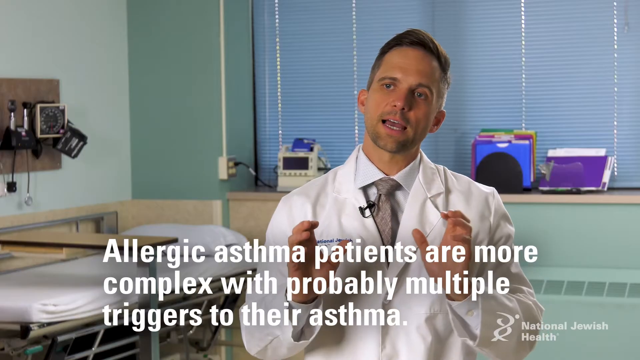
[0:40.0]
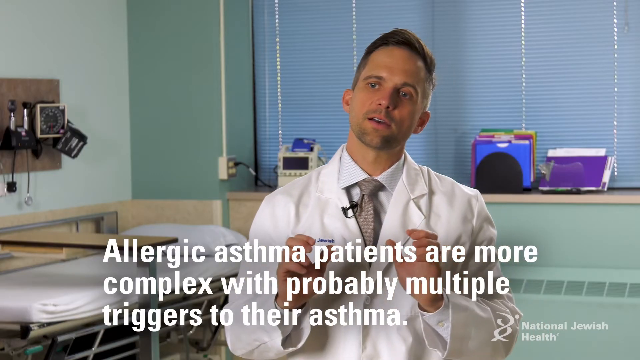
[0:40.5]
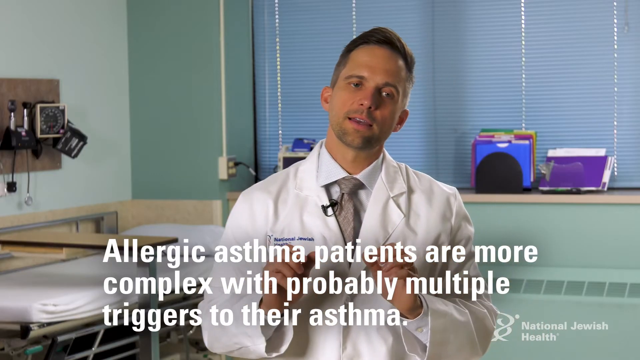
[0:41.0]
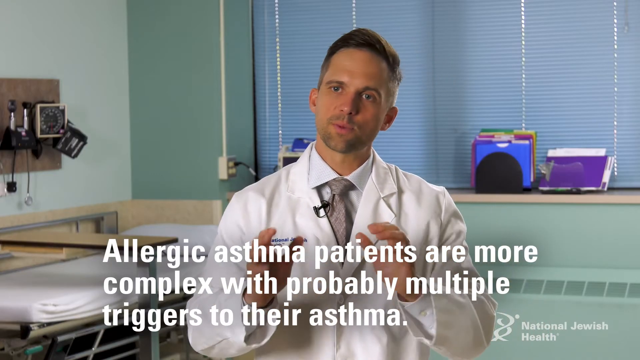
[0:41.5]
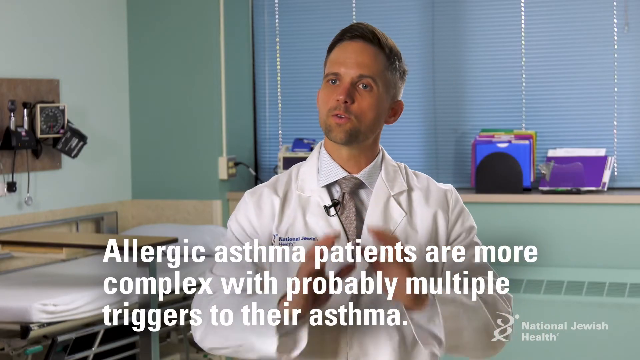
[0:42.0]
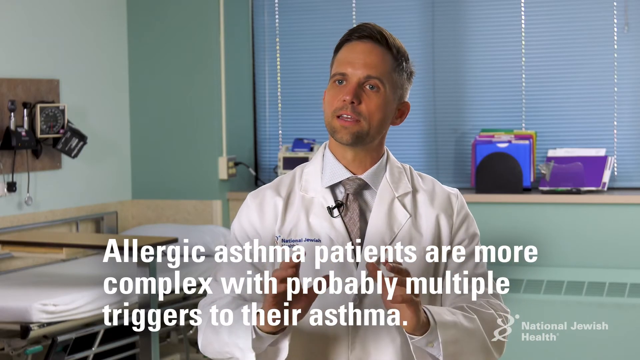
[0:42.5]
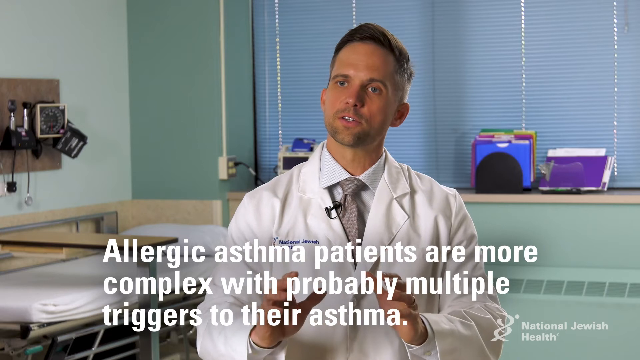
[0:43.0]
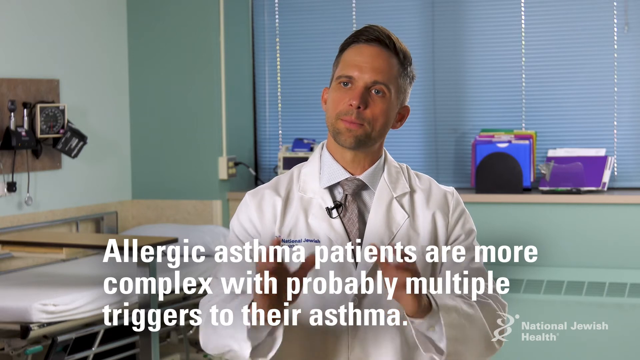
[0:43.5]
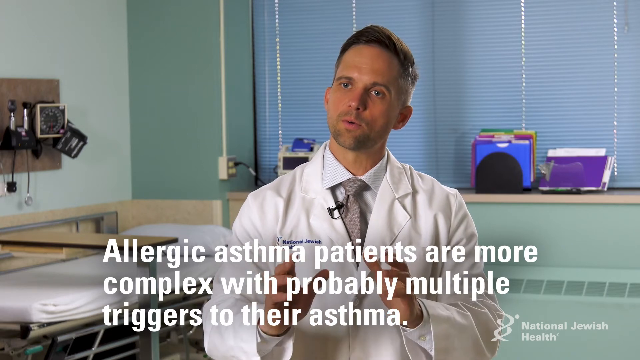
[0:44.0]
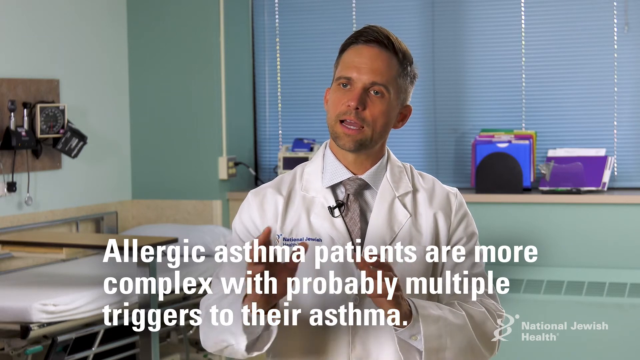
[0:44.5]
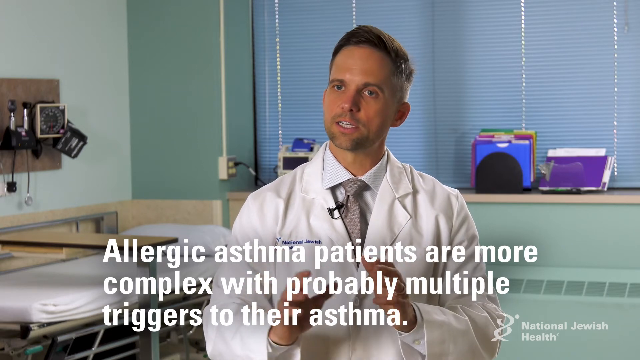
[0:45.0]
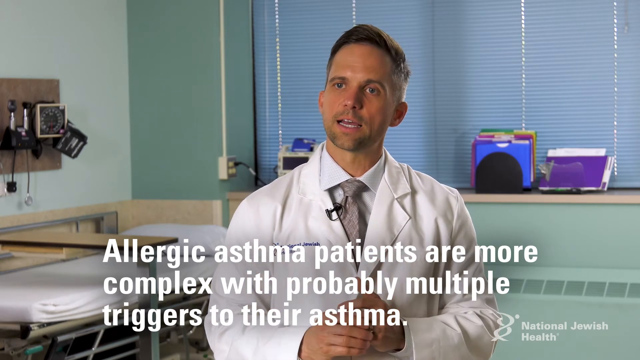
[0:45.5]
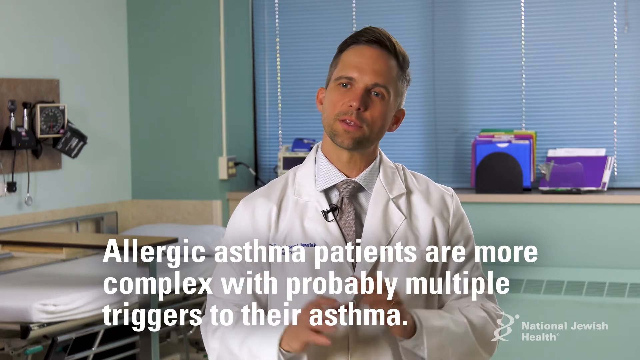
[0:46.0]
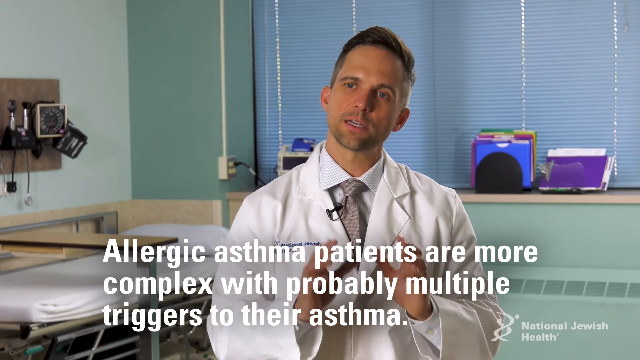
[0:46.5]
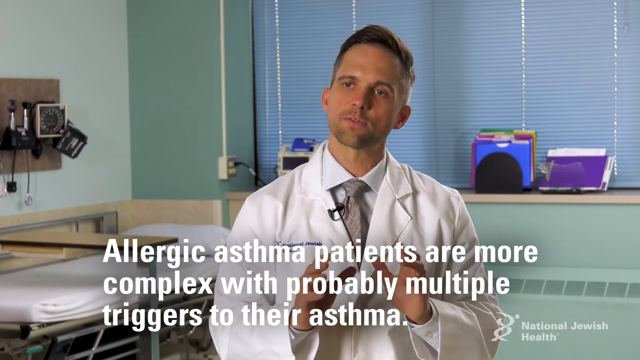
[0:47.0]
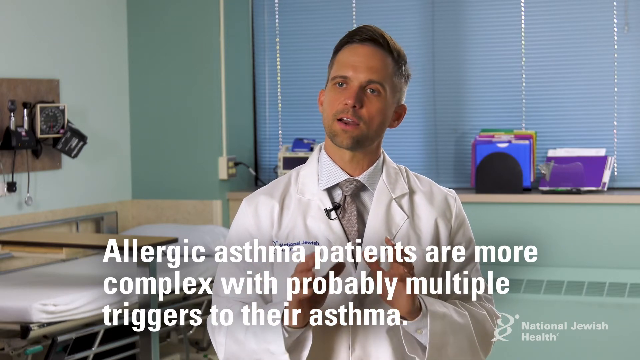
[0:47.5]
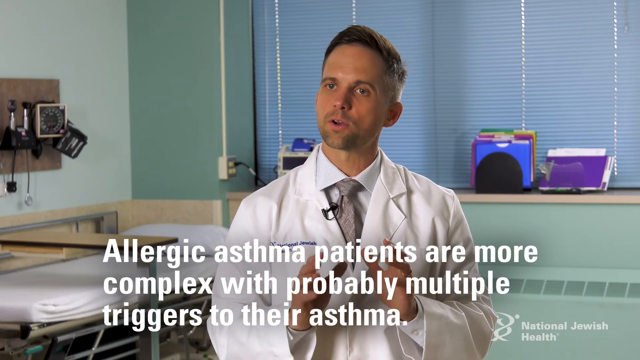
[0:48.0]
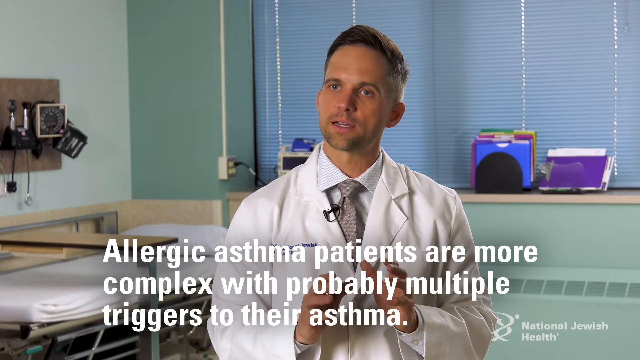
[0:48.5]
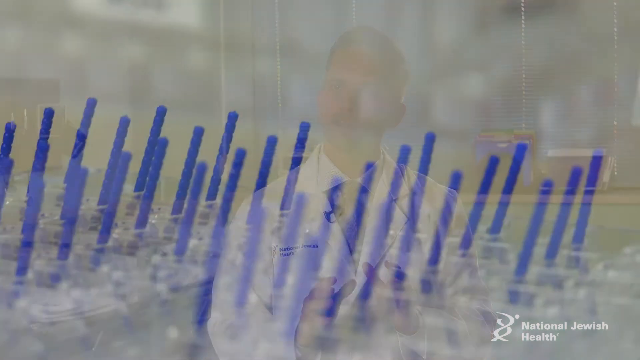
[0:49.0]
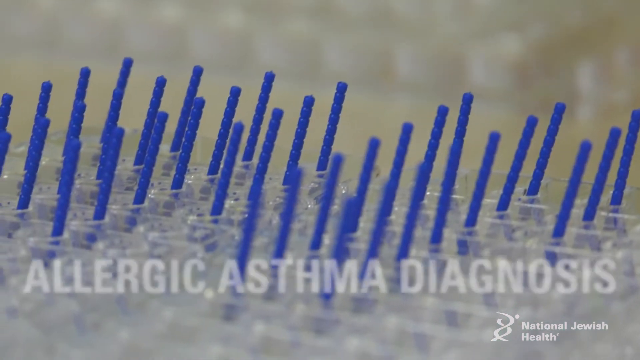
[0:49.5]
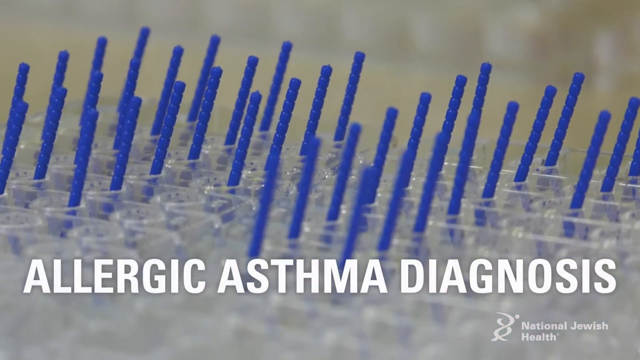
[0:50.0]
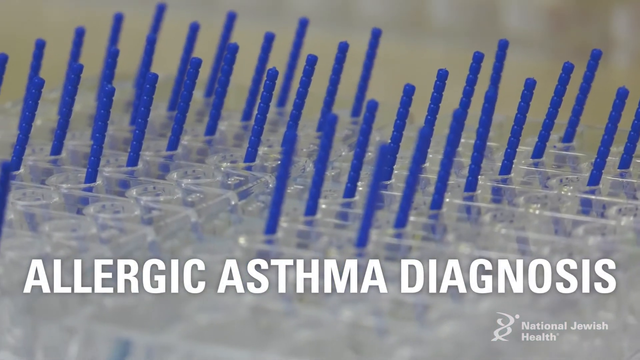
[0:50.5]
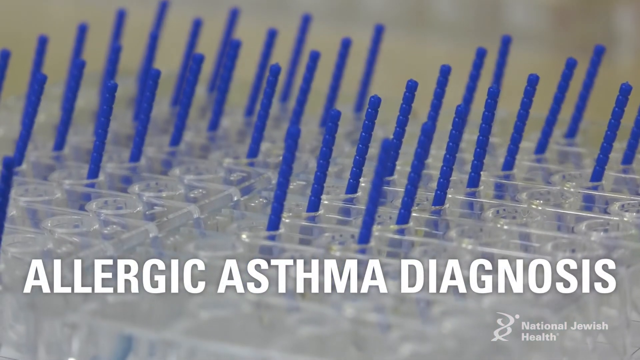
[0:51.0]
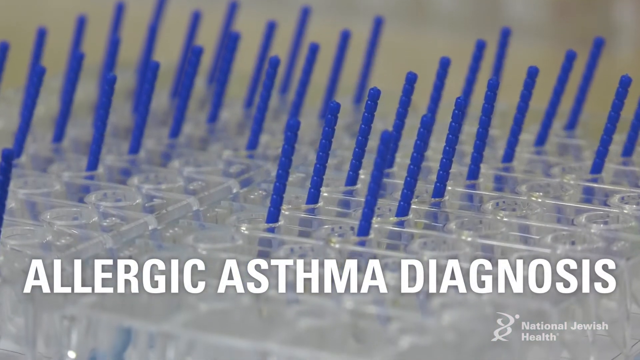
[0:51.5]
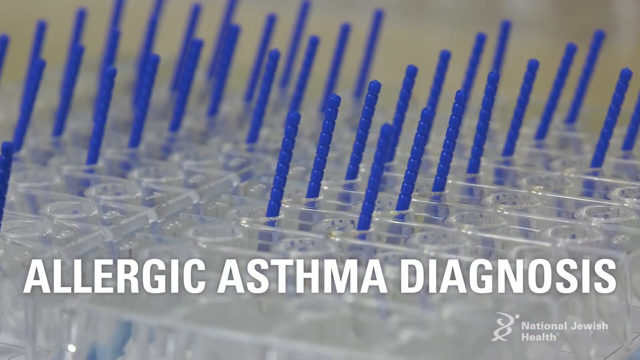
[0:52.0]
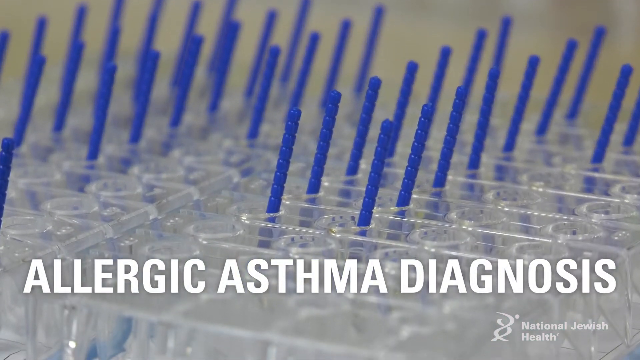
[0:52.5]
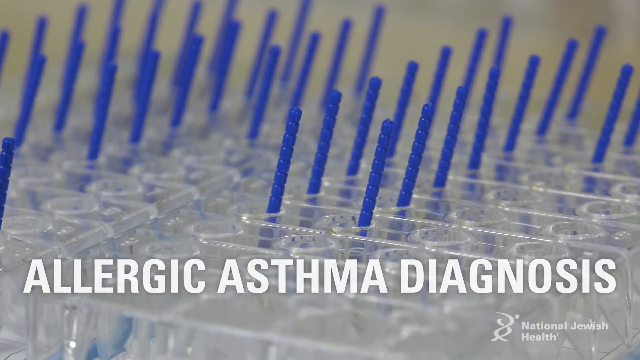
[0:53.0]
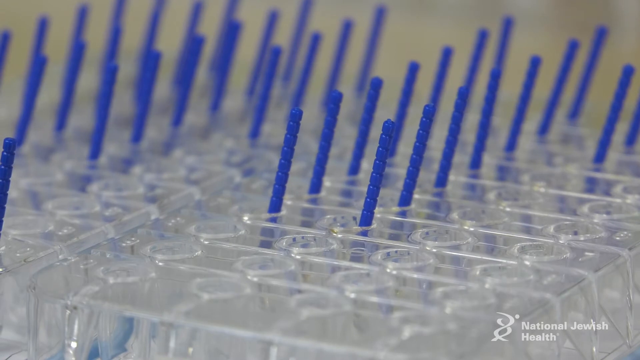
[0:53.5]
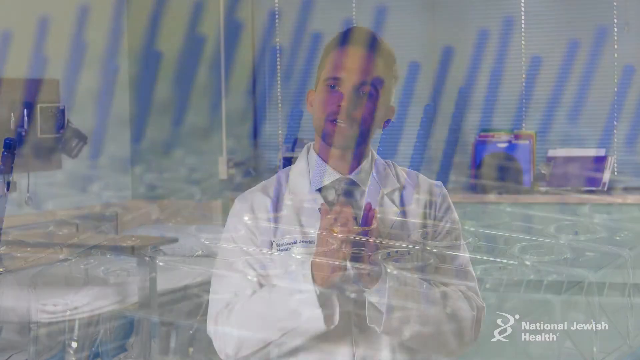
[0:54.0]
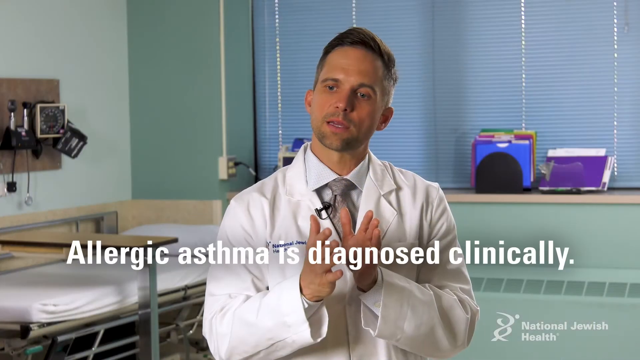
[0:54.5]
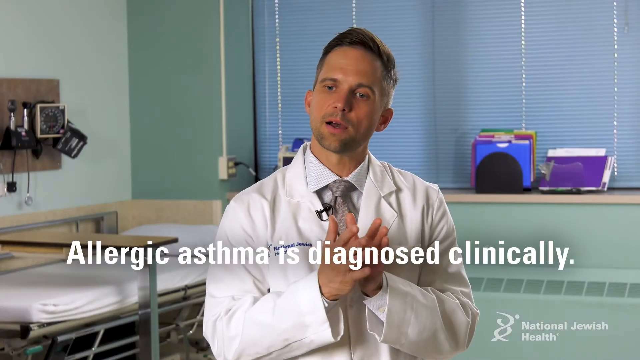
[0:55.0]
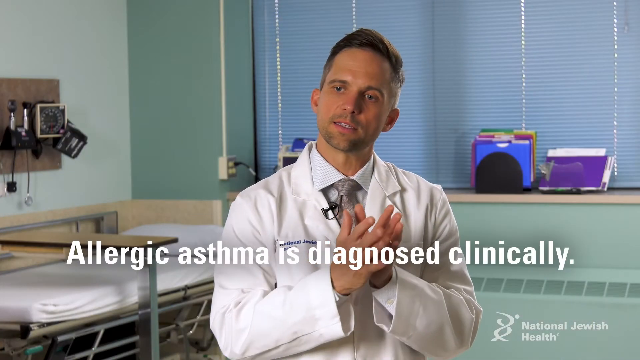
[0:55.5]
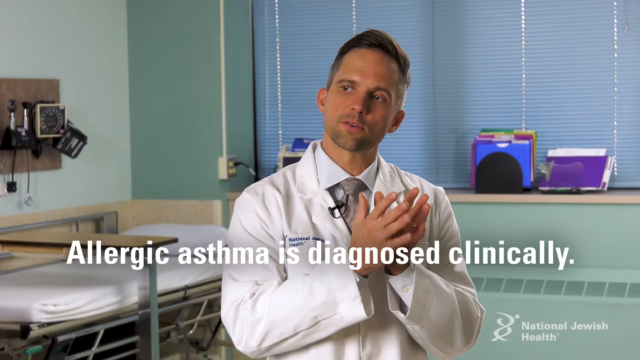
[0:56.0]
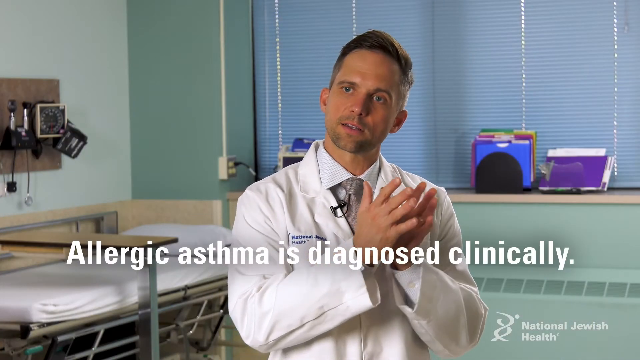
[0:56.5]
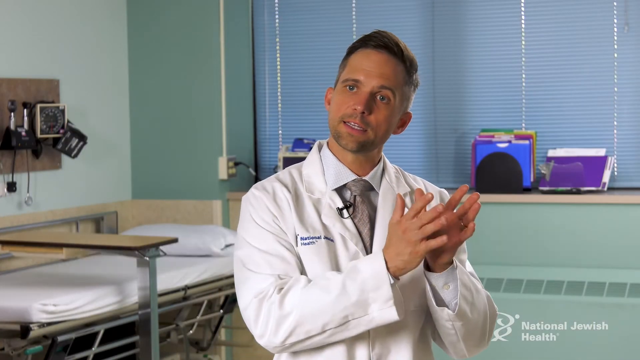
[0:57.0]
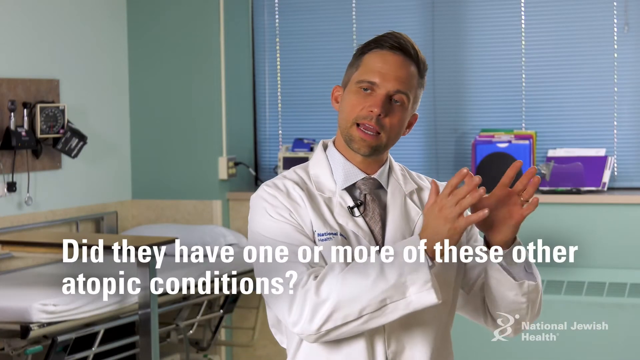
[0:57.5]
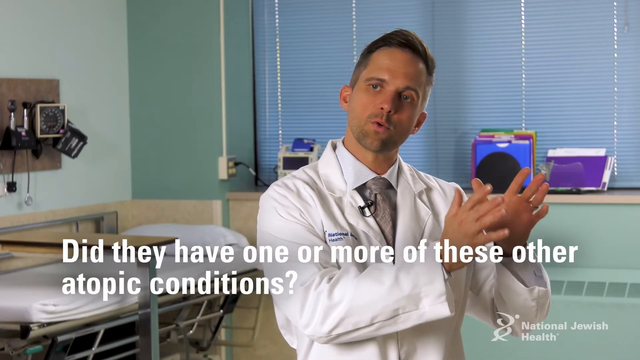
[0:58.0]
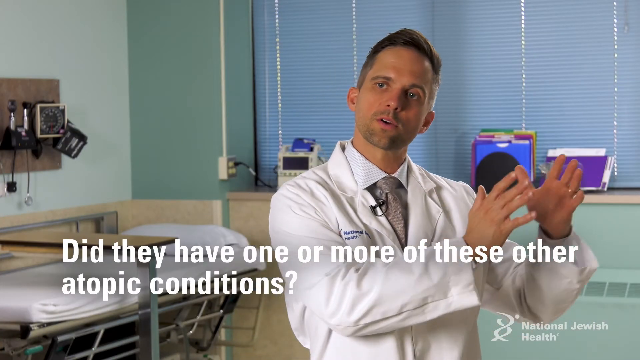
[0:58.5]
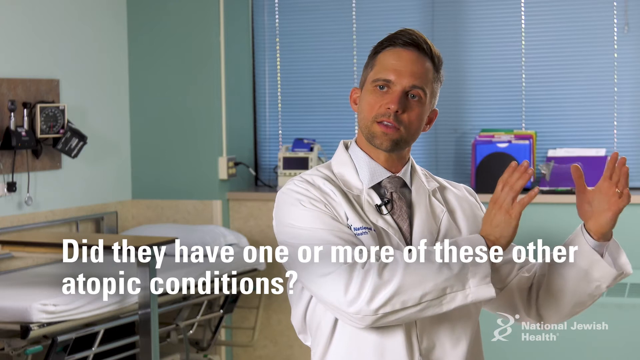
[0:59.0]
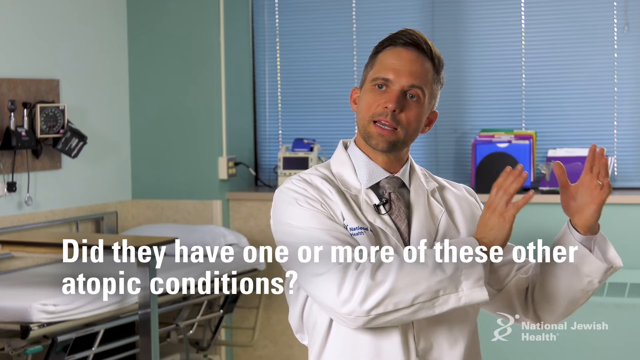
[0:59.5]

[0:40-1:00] The doctor talks throughout. He wears a white coat and a purple tie, and a black microphone is fastened to his white lab coat. The background looks like a classroom or a regular hospital room, most likely a classroom. Big blue mini blinds cover a big window, and some medical equipment hangs off the wall.